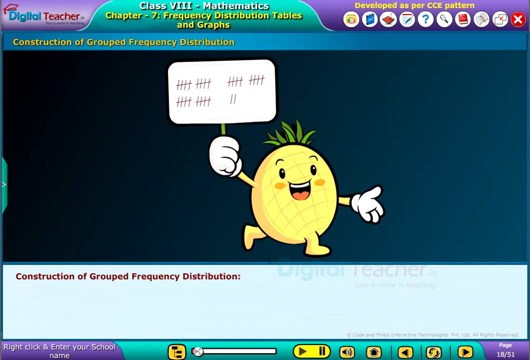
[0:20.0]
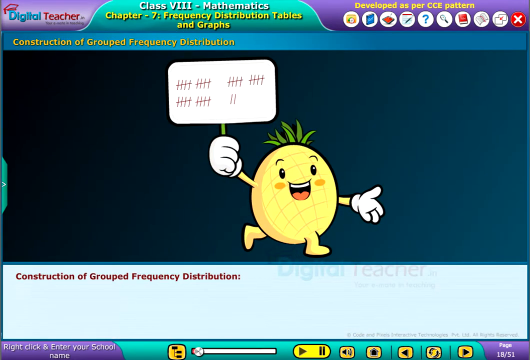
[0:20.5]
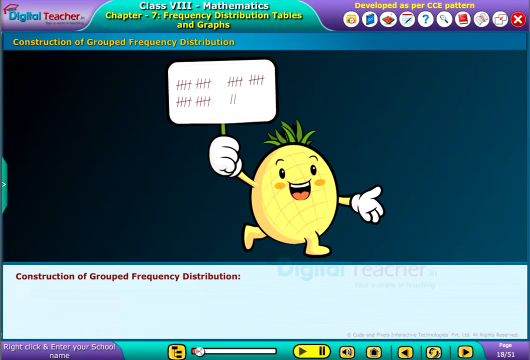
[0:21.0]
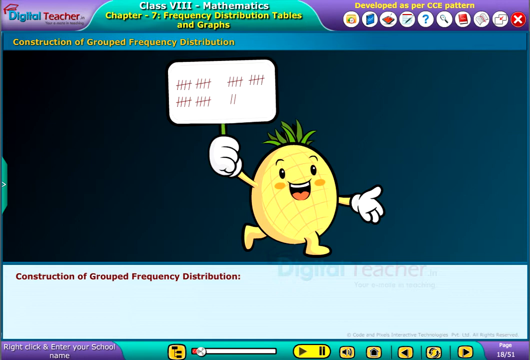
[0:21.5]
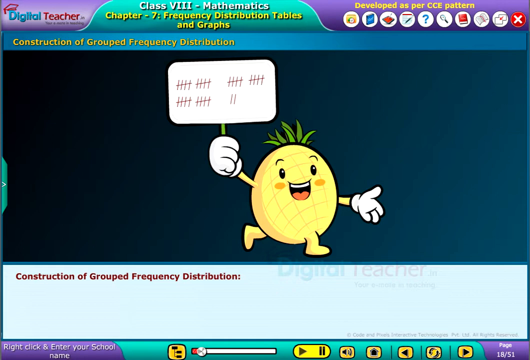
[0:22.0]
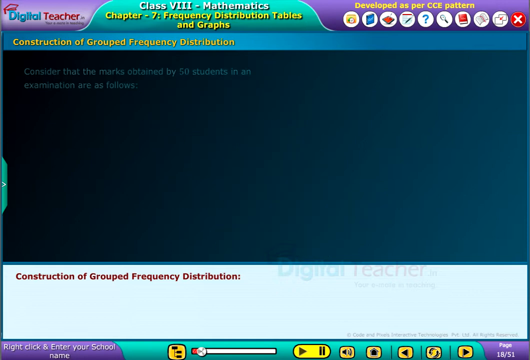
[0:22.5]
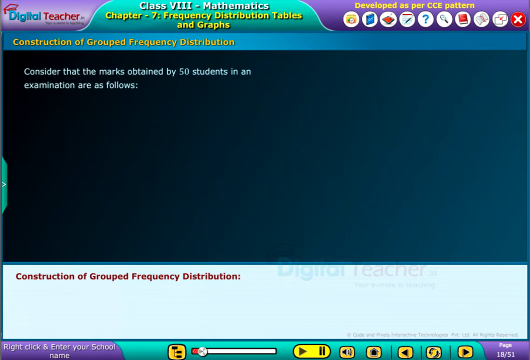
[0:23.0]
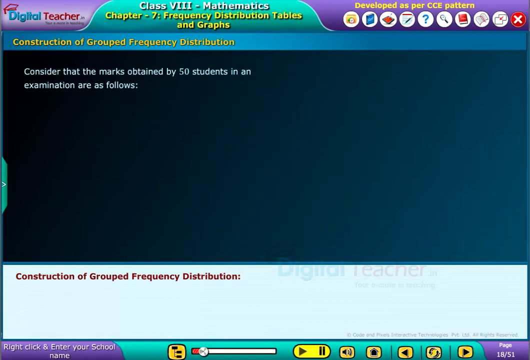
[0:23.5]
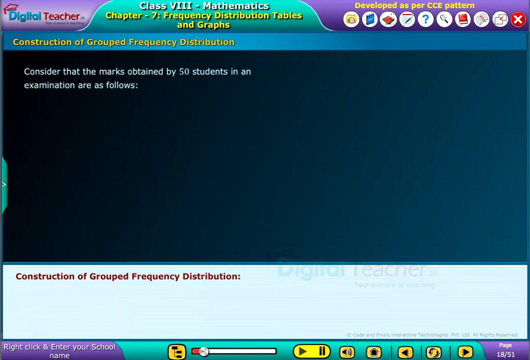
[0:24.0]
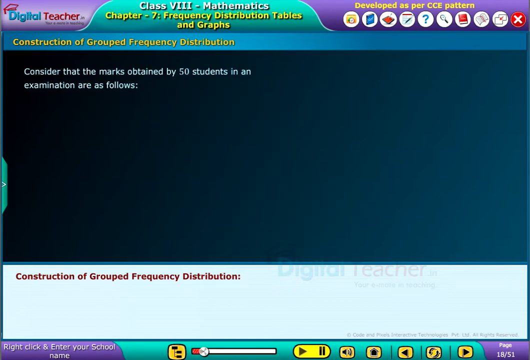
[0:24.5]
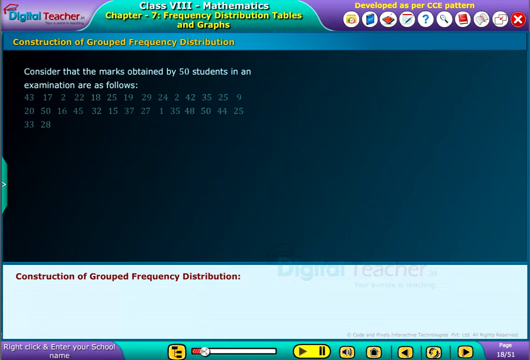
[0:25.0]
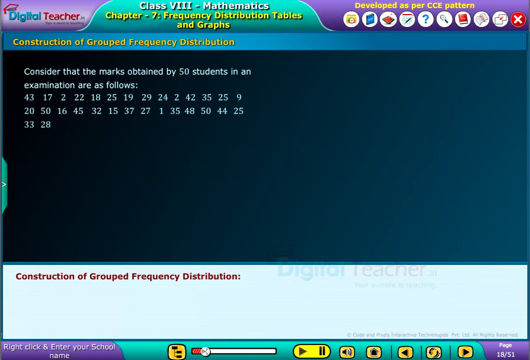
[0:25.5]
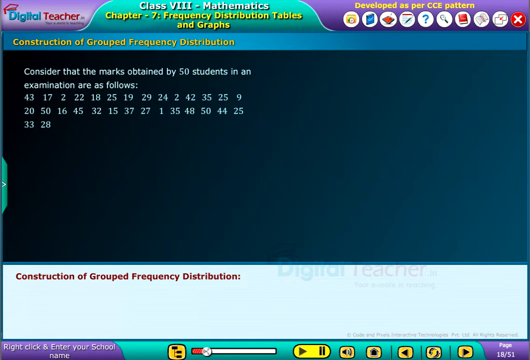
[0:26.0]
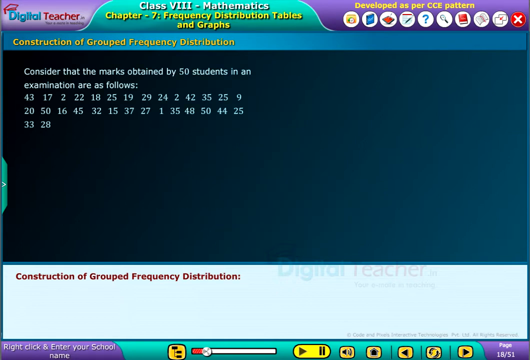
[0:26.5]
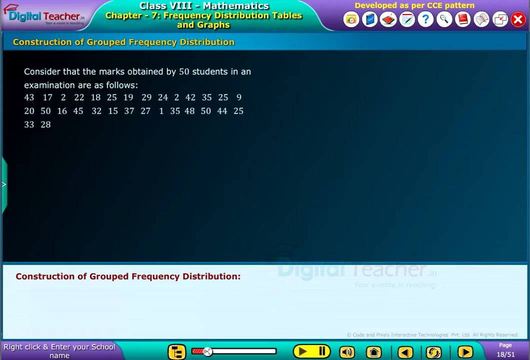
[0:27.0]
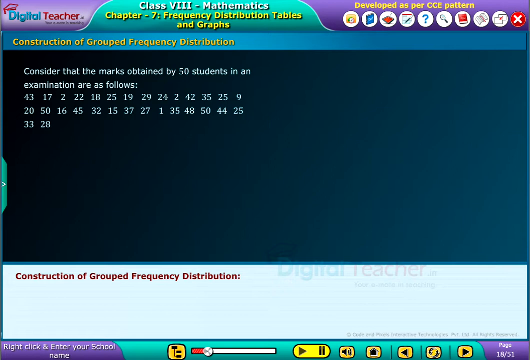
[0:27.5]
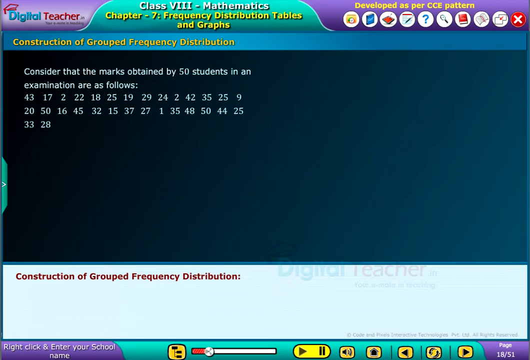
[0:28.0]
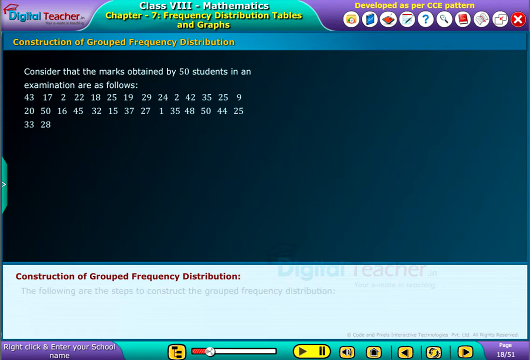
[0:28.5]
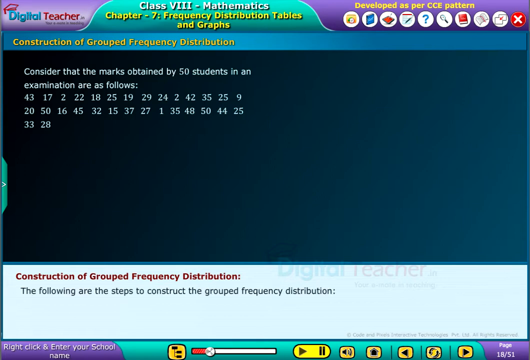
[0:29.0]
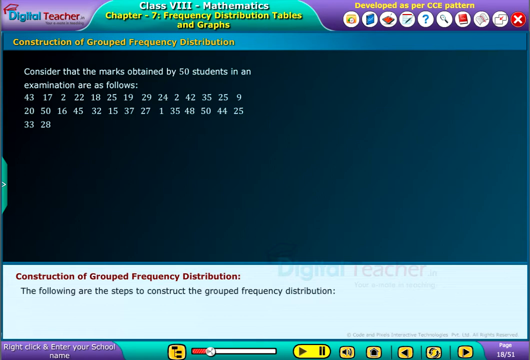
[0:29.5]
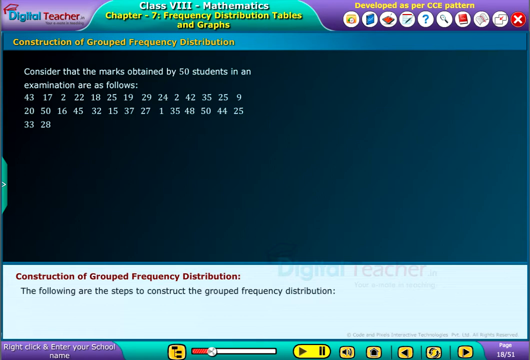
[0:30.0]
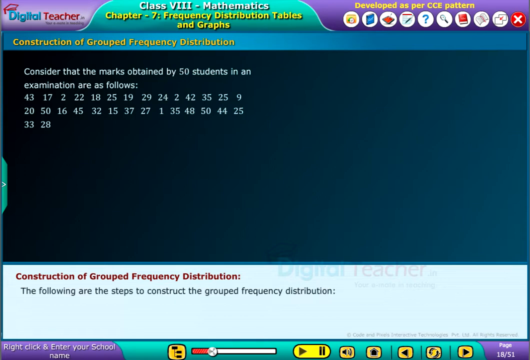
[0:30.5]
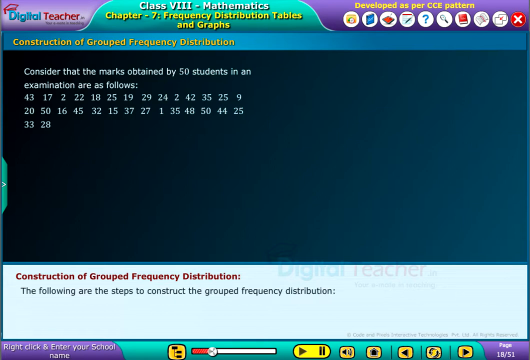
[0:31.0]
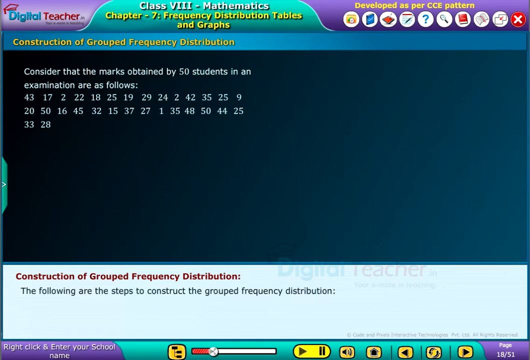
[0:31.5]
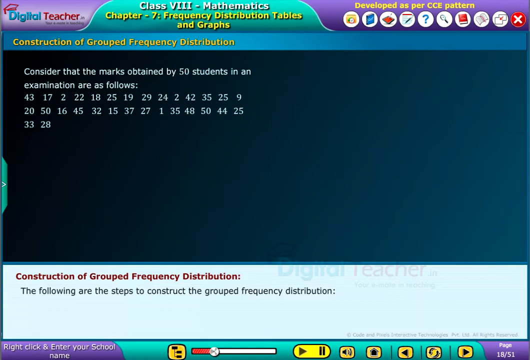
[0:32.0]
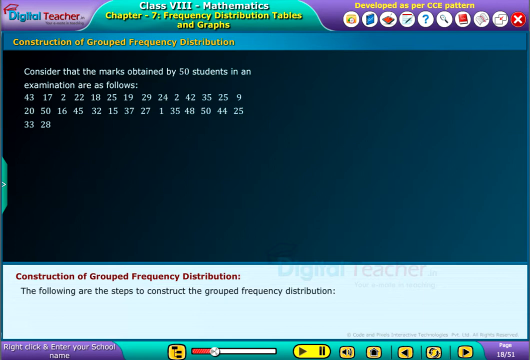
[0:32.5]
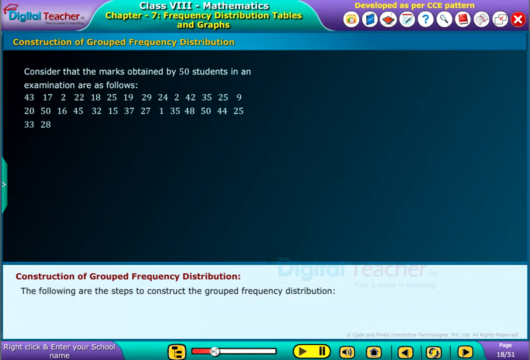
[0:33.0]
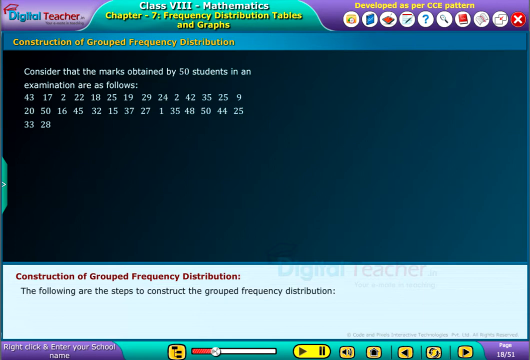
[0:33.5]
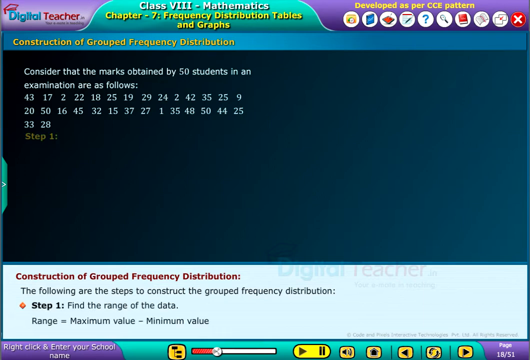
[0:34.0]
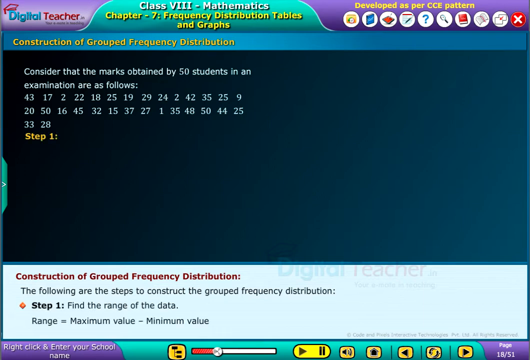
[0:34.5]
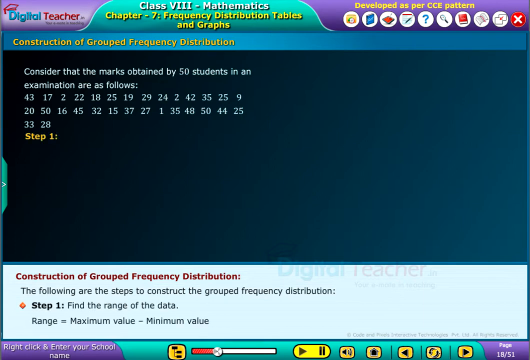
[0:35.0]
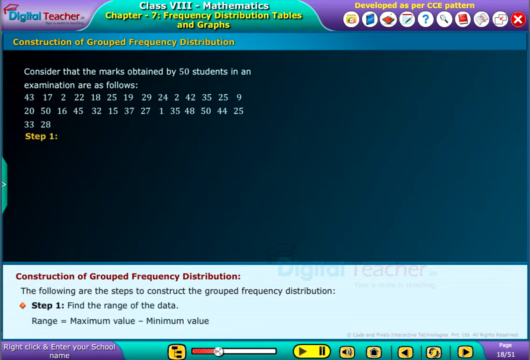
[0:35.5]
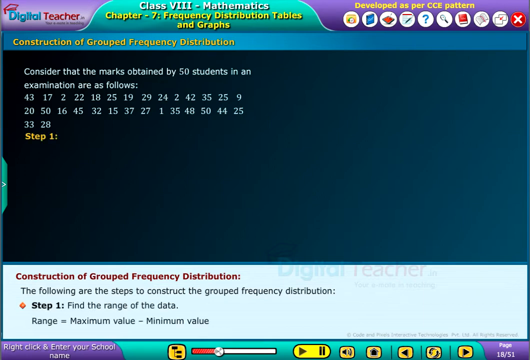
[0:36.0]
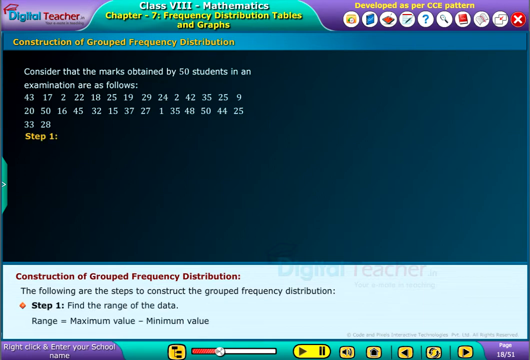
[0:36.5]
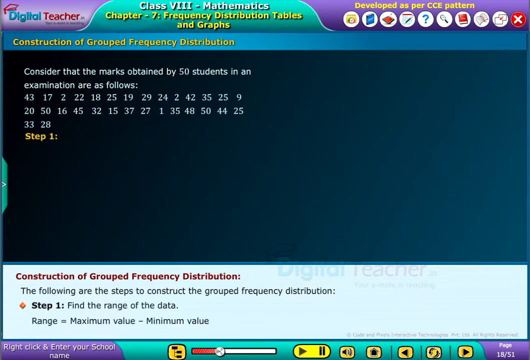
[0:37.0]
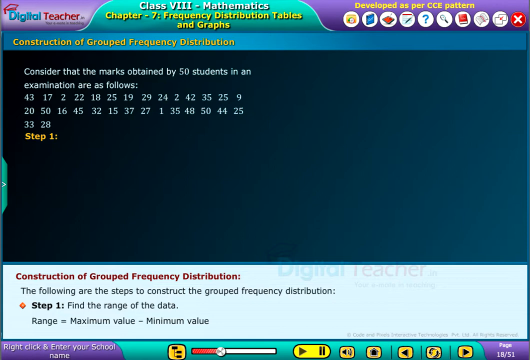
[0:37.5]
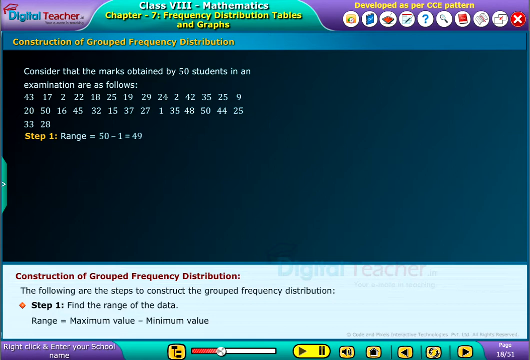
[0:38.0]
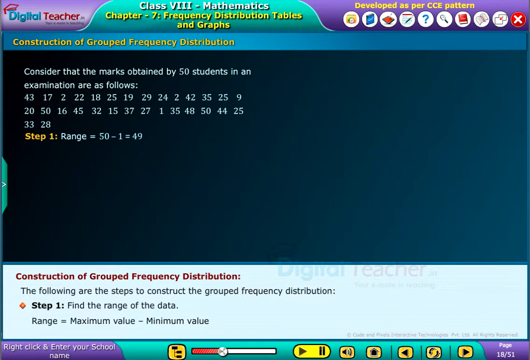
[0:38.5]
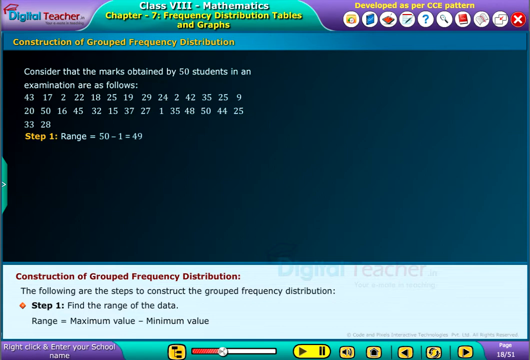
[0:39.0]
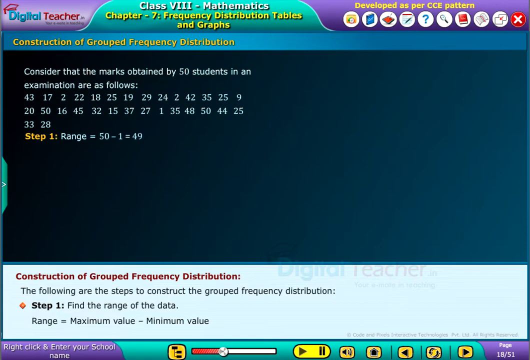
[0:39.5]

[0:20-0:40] A cartoon-looking pineapple is in the center of the screen on what looks to be an educational slide. At the top are "class VIII" in Roman numerals, "mathematics", "chapter 7" and "frequency distribution tables", set against a teal, folder-tab-like background. The top left corner says "digital teacher", and the top right has a number of small circular icons that can be clicked for more information. The pineapple fades away, some white text appears, and then a group of numbers appears. At the bottom is the title "construction of grouped frequency distribution" in a dark, blood-reddish color, and beneath it information appears in black text. The first line says "the following are the steps to construct the grouped frequency distribution", and the steps appear with pauses between them: "step one, find the range of the data", followed by another line of text beneath it. On the main screen, step 1 appears: "range = 50 - 1 = 49". Above that is the grouping of numbers, with the words "consider that the marks obtained by 50 students in an examination are as follows" above a long string of numbers.